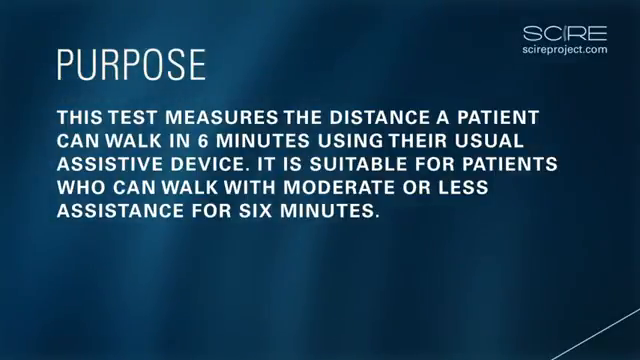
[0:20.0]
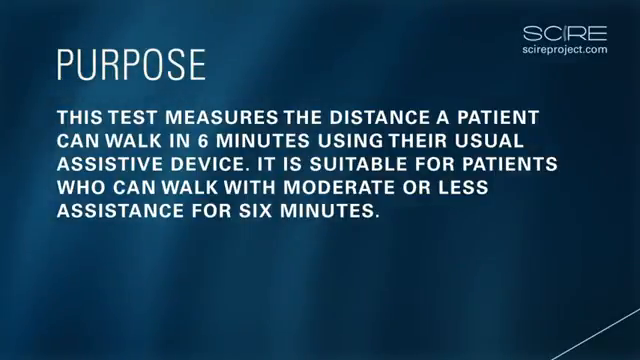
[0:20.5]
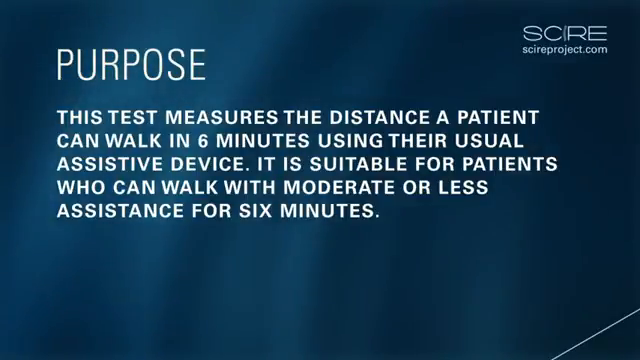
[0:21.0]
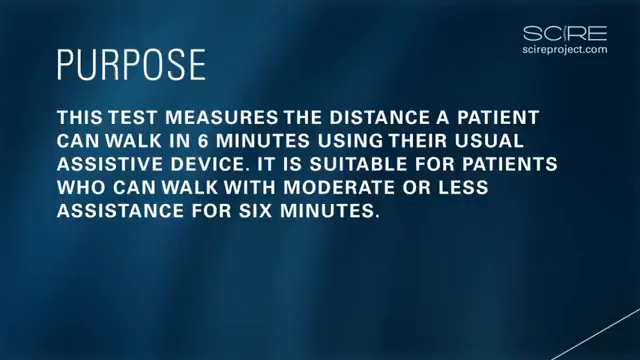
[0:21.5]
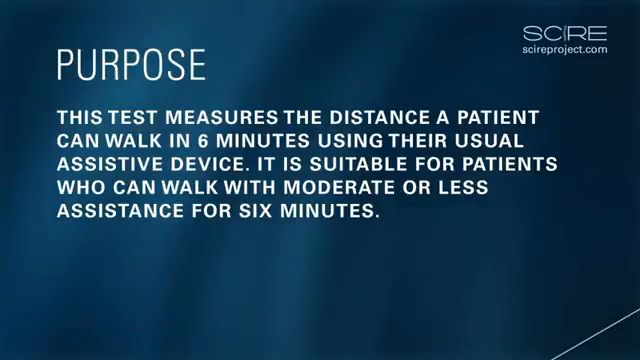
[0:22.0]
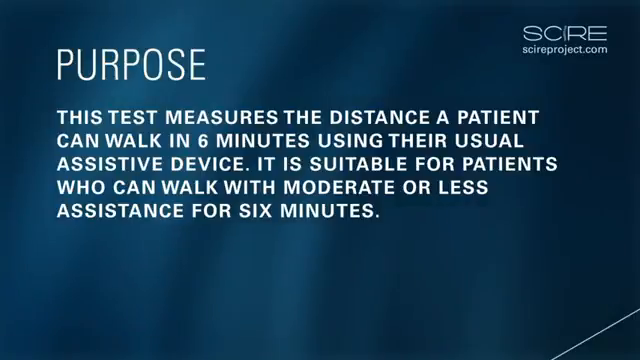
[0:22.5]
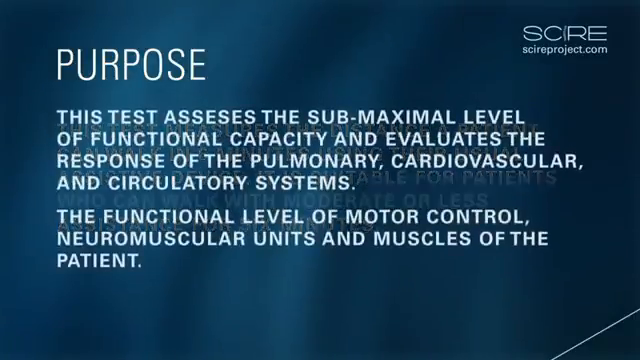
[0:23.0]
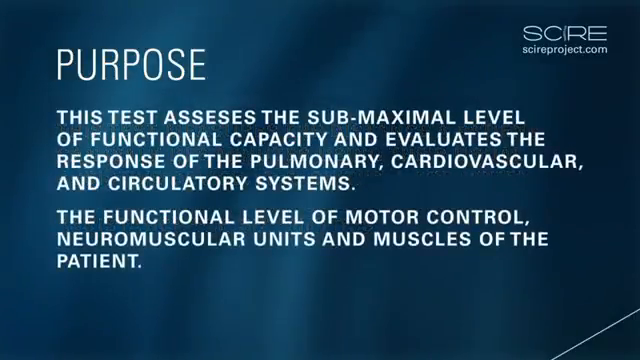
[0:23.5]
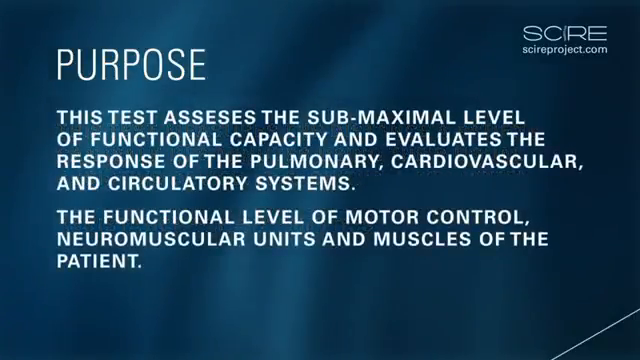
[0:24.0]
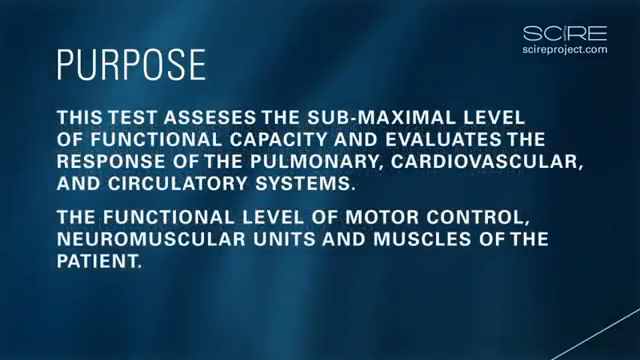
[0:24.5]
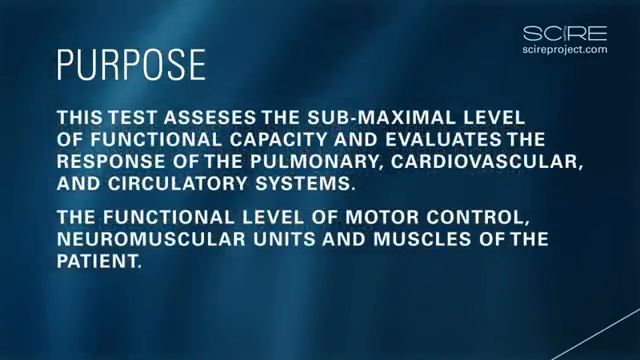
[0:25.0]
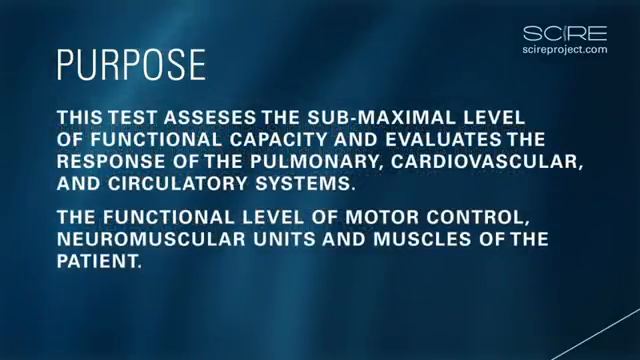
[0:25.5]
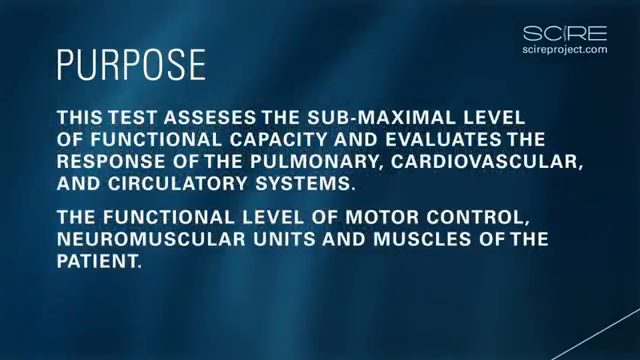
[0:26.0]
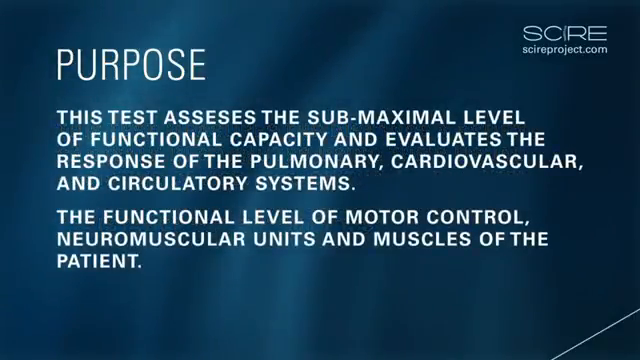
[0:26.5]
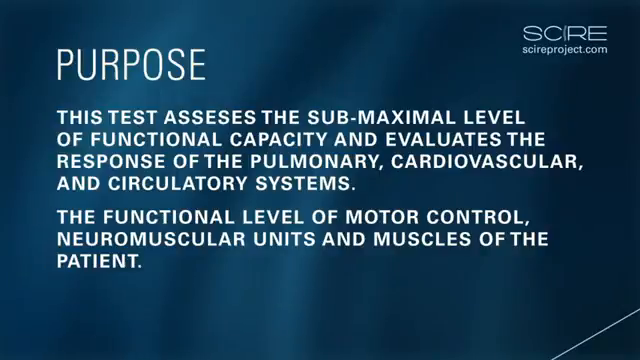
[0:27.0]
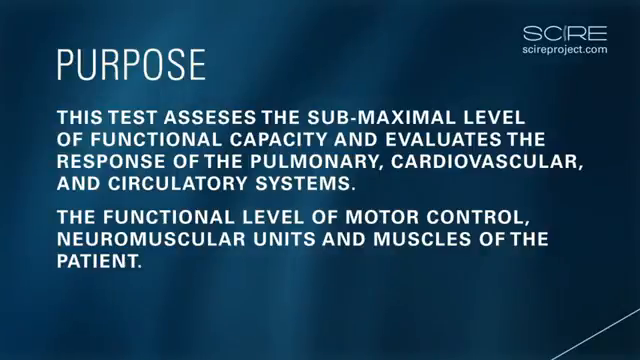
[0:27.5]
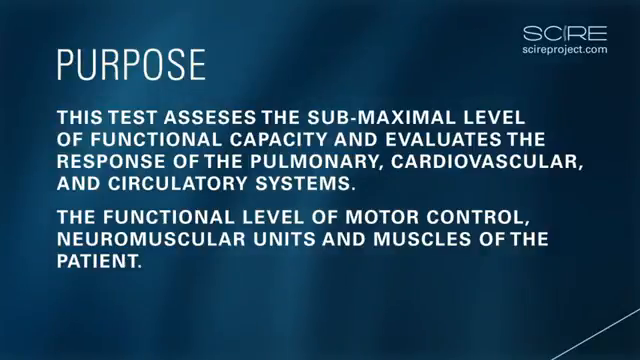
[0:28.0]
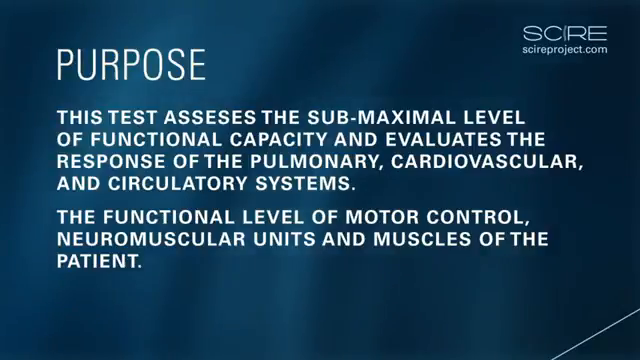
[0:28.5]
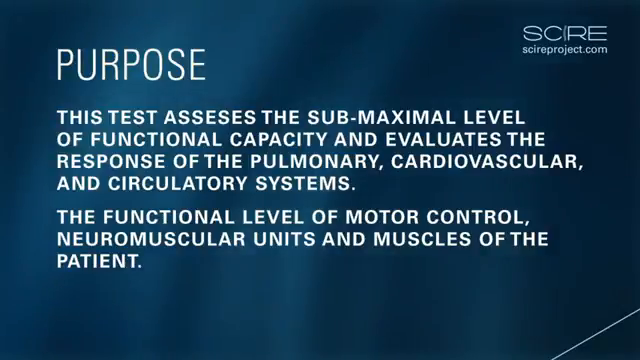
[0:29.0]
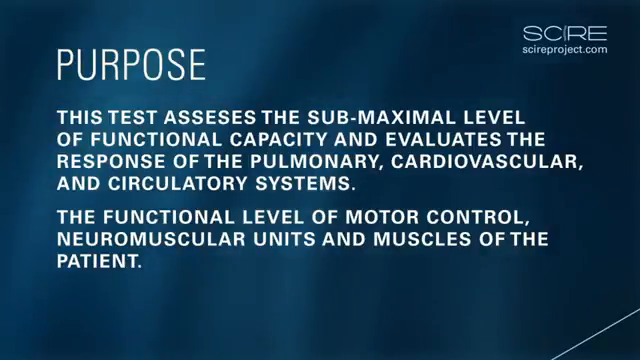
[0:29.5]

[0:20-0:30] New text appears reading "purpose: this test assesses the sub-maximal level of functional capacity and evaluates the response of the pulmonary, cardiovascular and circulatory systems. The functional level of motor control, neuromuscular units and muscles of the patient." The background moves lightly and looks like a very blurry, unclear view of the northern lights in the night sky. The text remains on screen for about eight seconds.